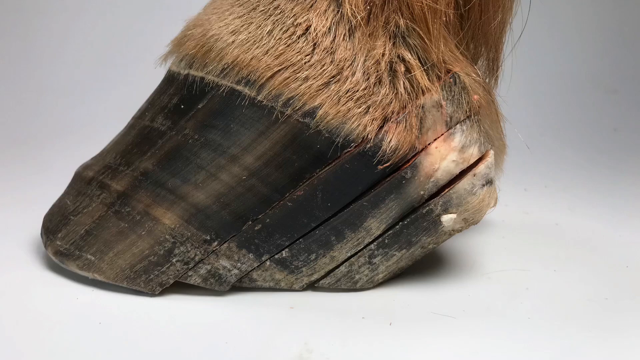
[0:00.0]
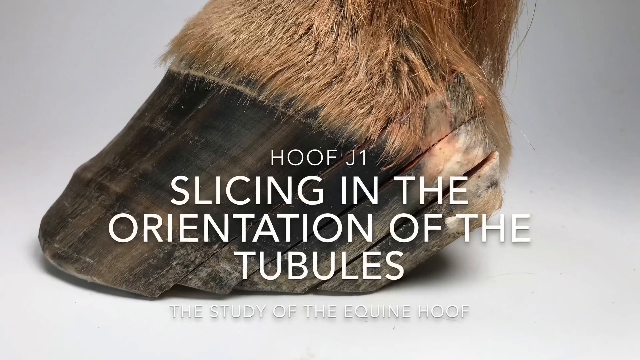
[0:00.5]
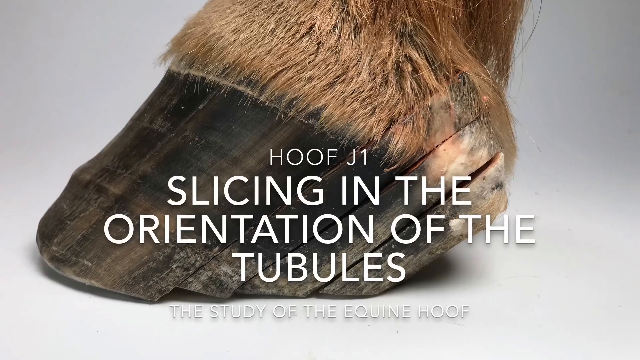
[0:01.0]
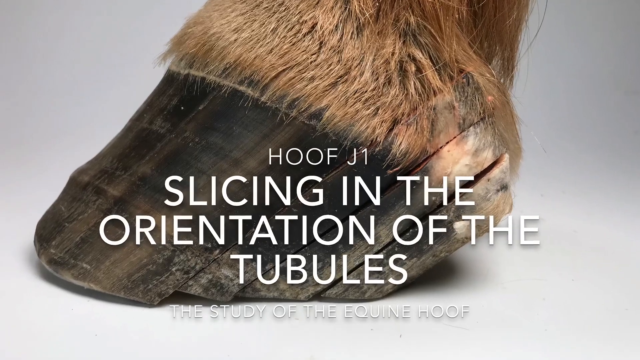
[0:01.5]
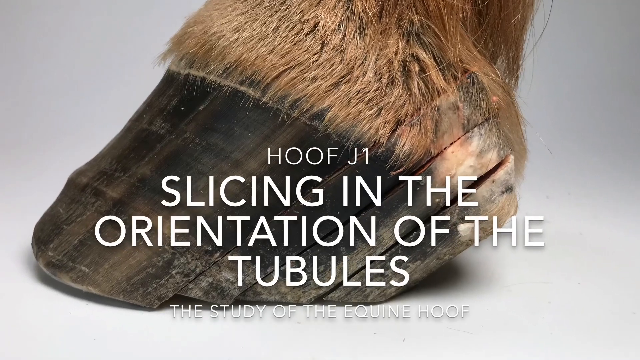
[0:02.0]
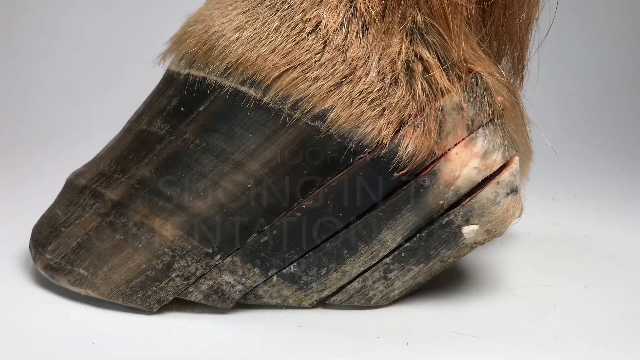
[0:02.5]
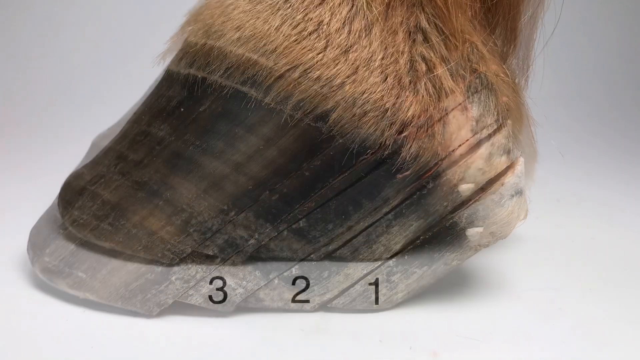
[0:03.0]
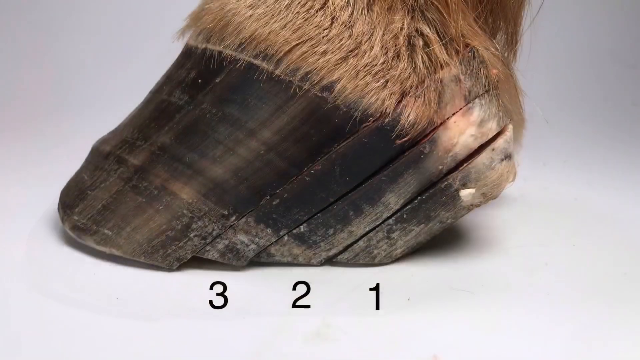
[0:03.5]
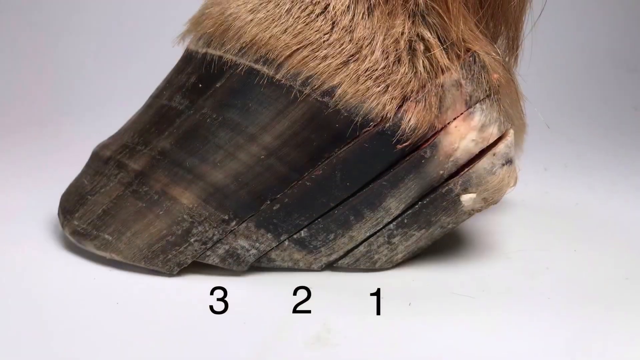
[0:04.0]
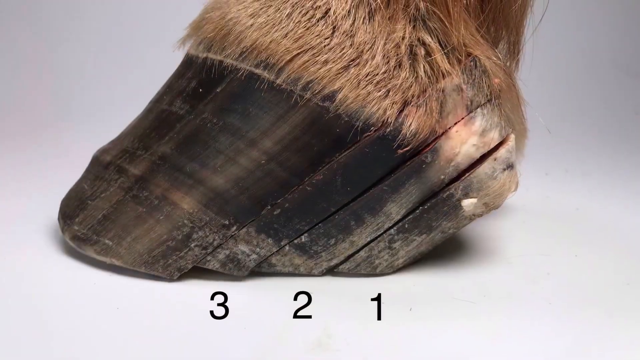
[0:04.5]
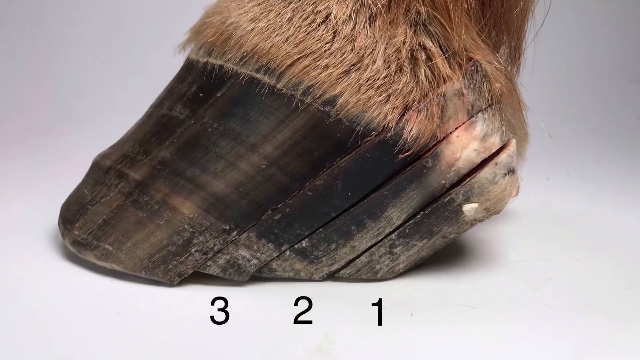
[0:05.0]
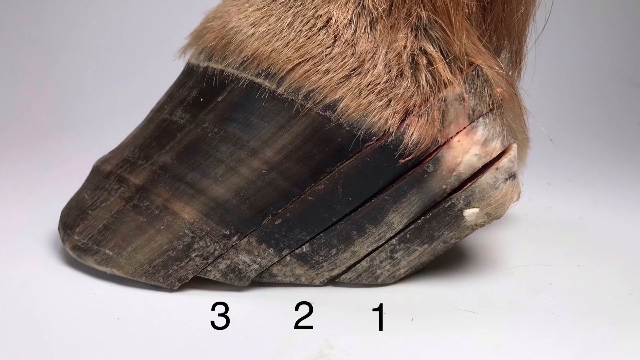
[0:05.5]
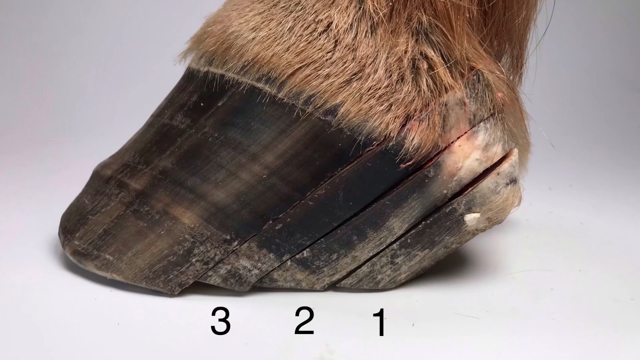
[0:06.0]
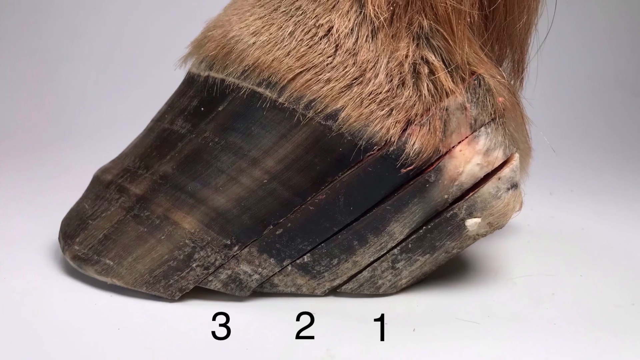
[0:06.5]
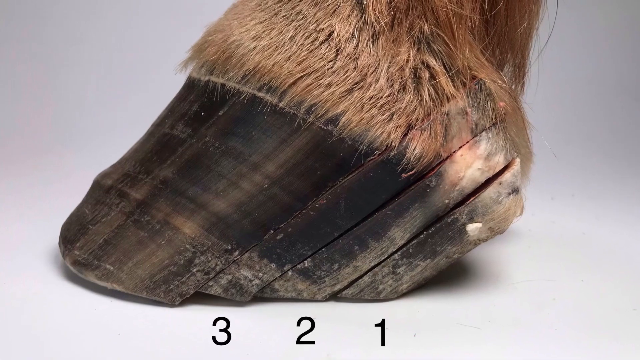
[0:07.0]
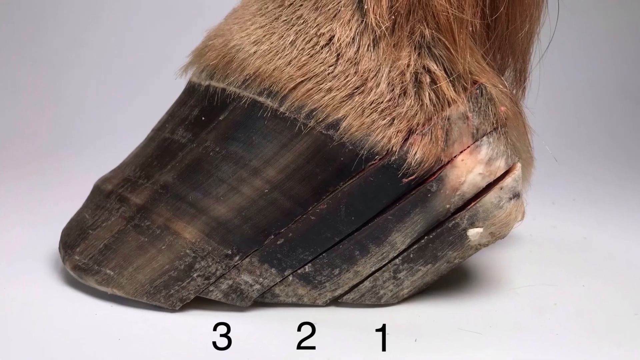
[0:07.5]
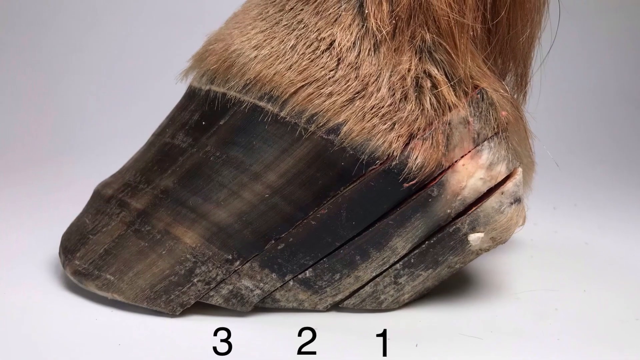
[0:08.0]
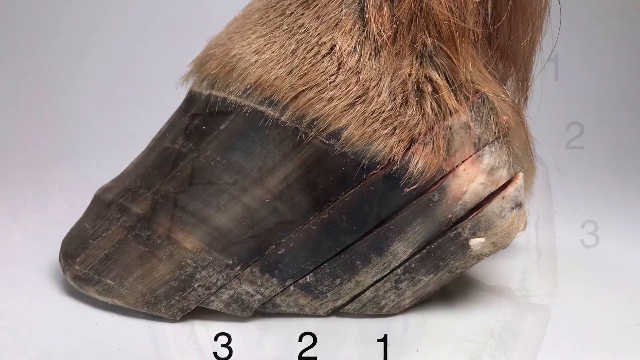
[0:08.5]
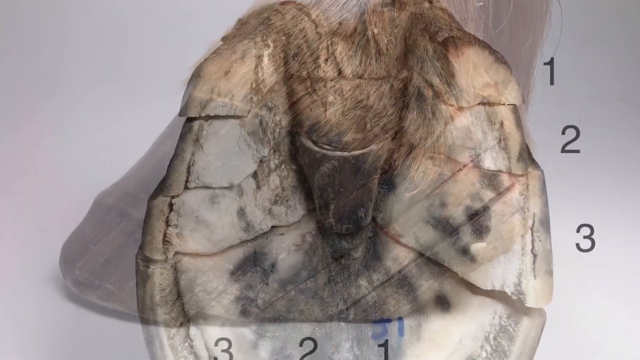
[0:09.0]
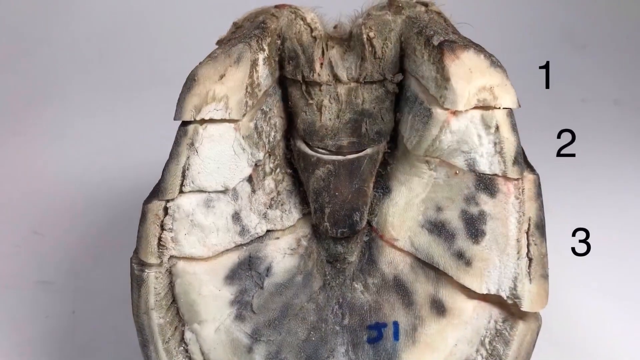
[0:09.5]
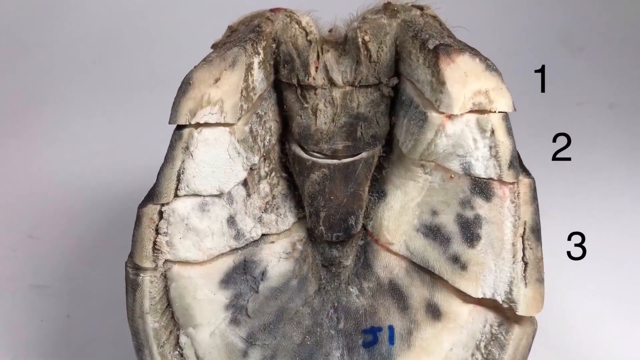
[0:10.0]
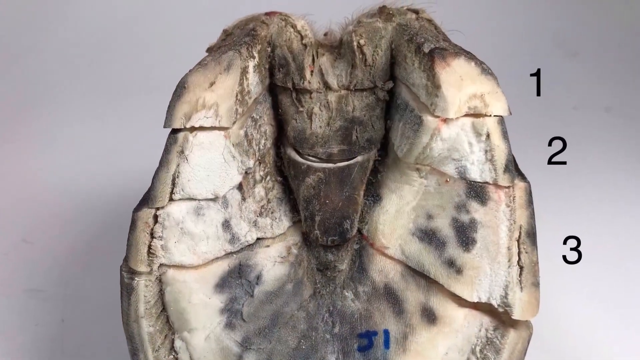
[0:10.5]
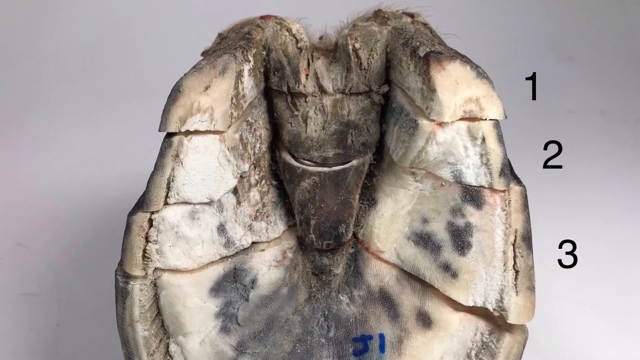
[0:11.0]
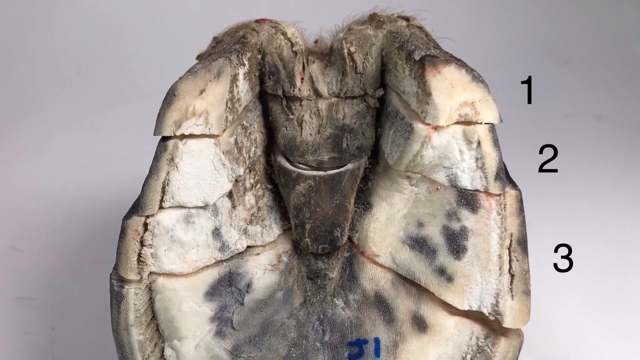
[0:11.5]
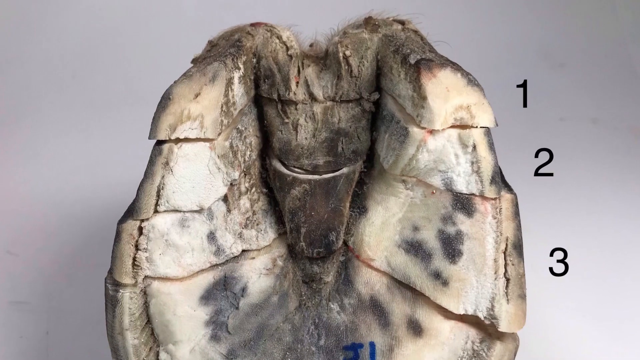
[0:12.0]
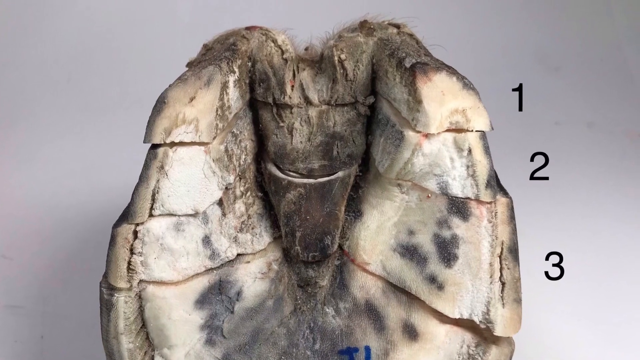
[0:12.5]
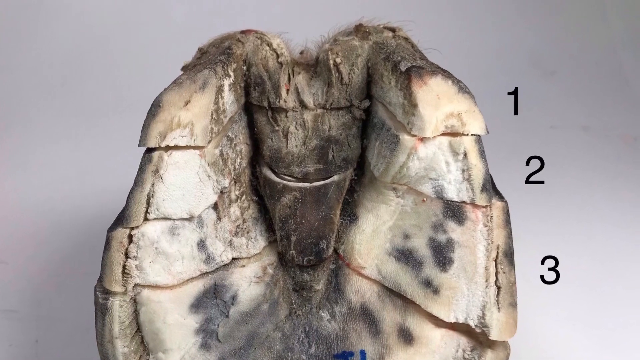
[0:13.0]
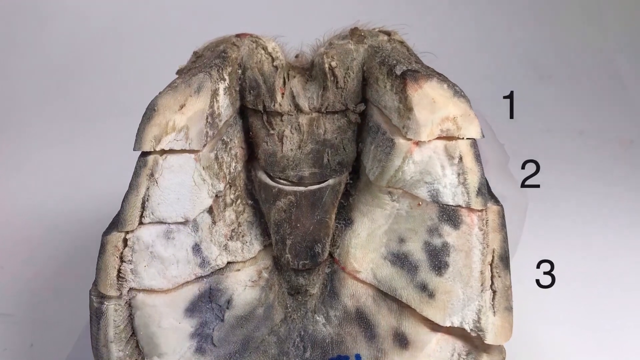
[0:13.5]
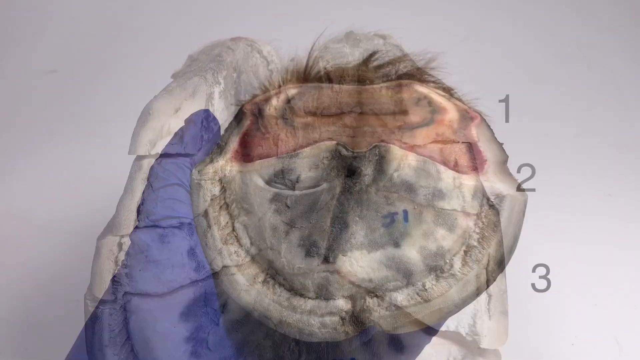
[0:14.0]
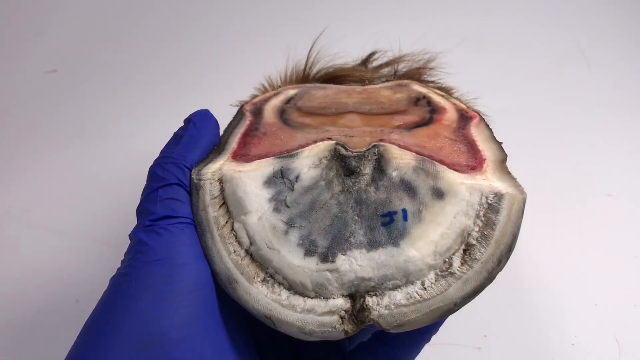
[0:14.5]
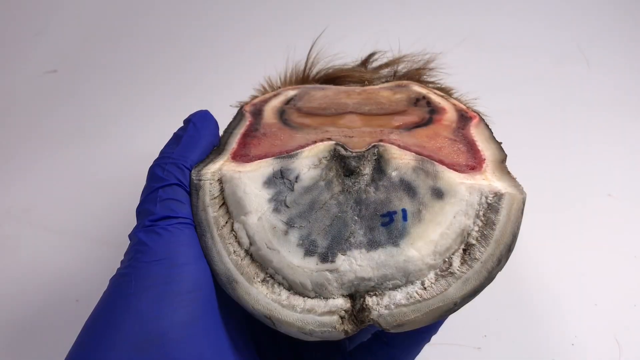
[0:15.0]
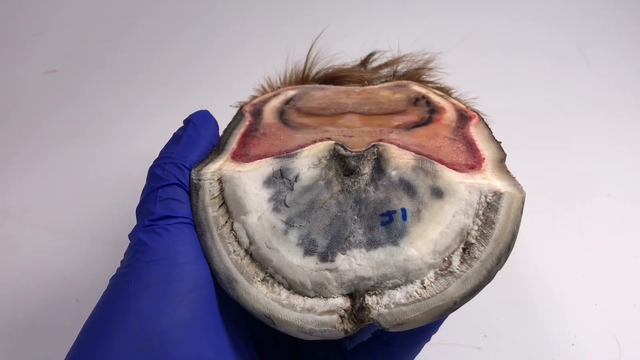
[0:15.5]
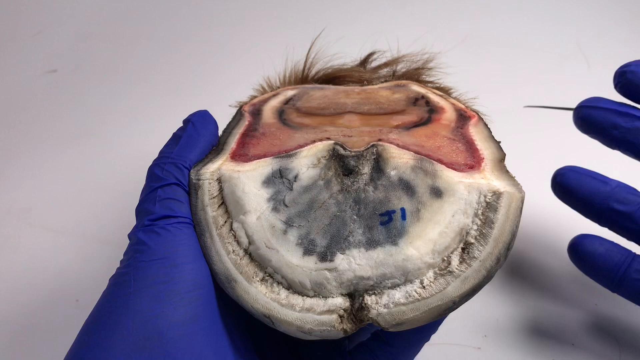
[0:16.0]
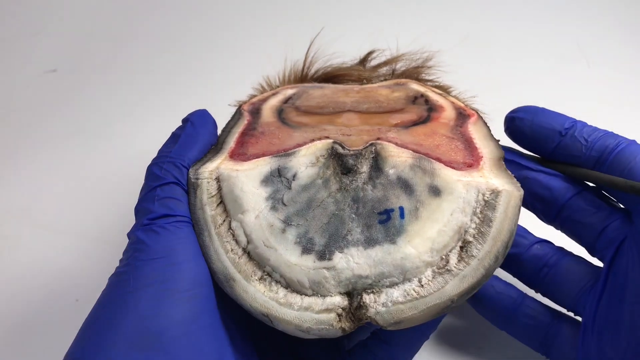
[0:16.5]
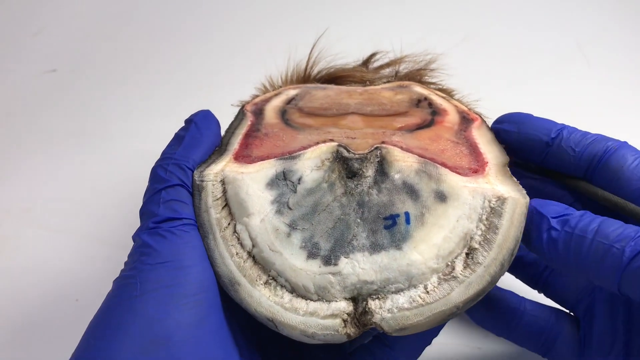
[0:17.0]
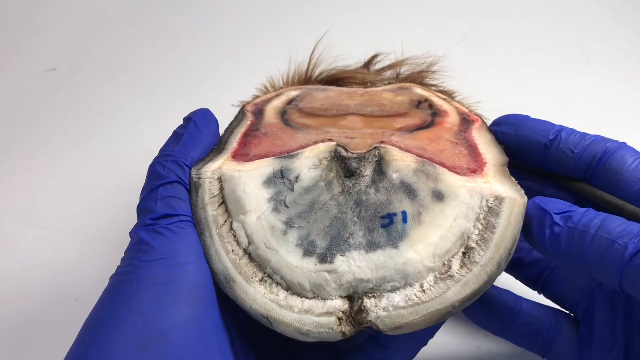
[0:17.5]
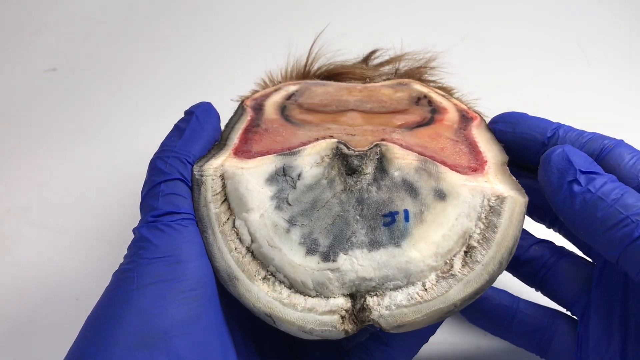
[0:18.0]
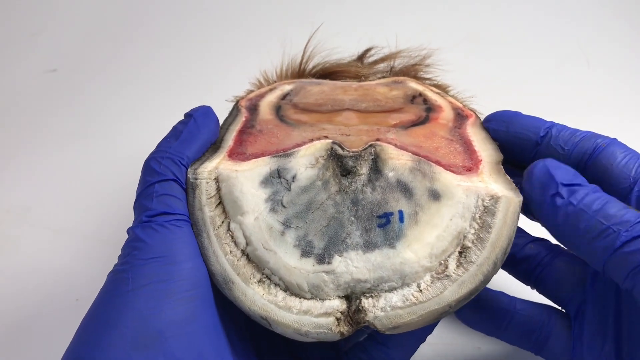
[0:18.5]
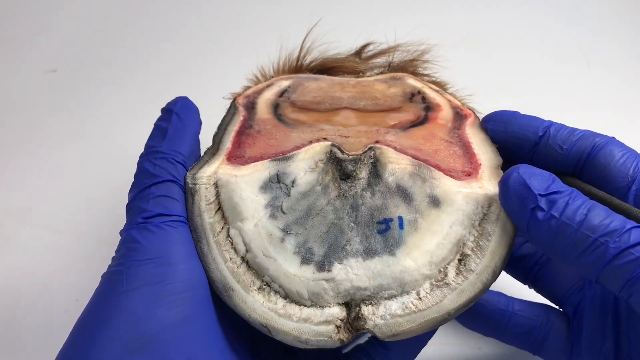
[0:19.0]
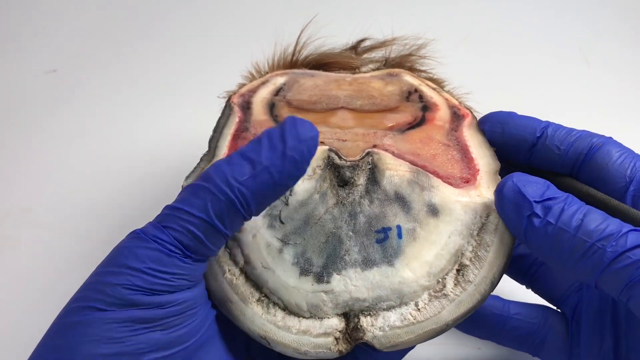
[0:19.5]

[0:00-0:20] The video opens on a horse hoof. The horse looks tan, a tannish reddish color, and the hoof is a dark brown, not quite black. White text pops up reading "hoof J1 slicing in the orientation of the tubules." After a small transition, the numbers three, two, one appear at the bottom, underneath the hoof. The video pans upward slightly, back onto the hoof. Then the bottom of the hoof is shown, the part that would touch the ground when the horse stands, with the numbers one, two, three in black font down the right side, from top right to bottom right: one at the top, then two, then three. The bottom of the hoof is white with some darker spots and a little dark brown. Another hoof bottom follows, circular in shape, with the top third reddish pinkish and the bottom part kind of white with gray, marked "J1." Hands in blue gloves hold this hoof.